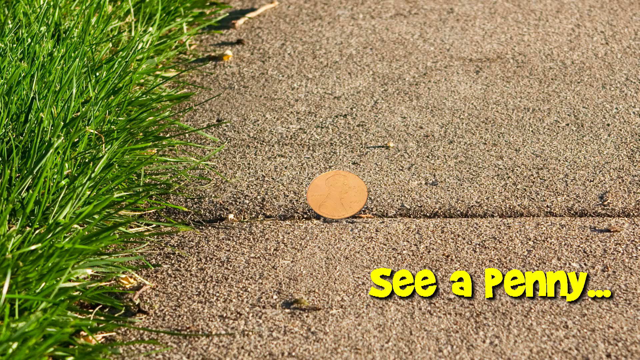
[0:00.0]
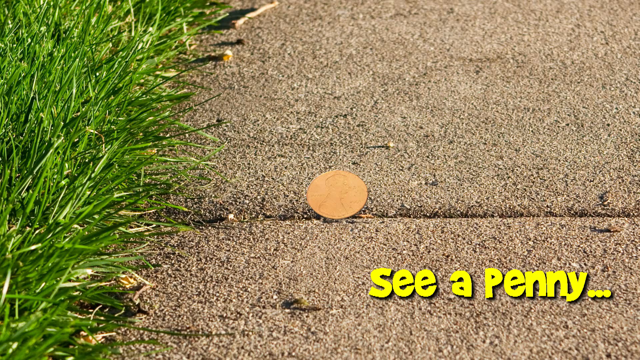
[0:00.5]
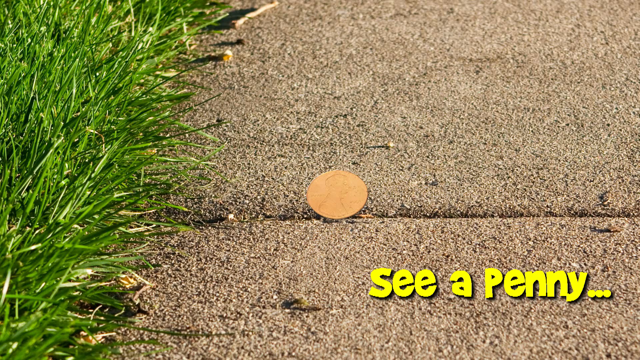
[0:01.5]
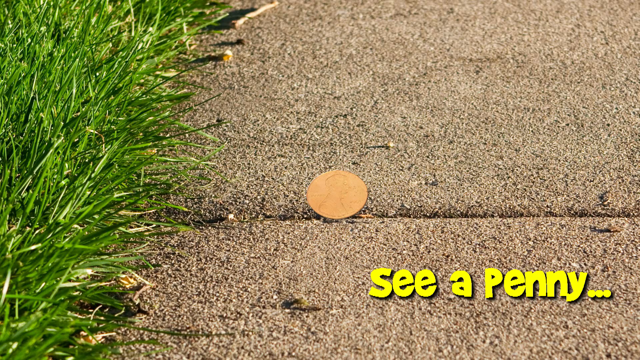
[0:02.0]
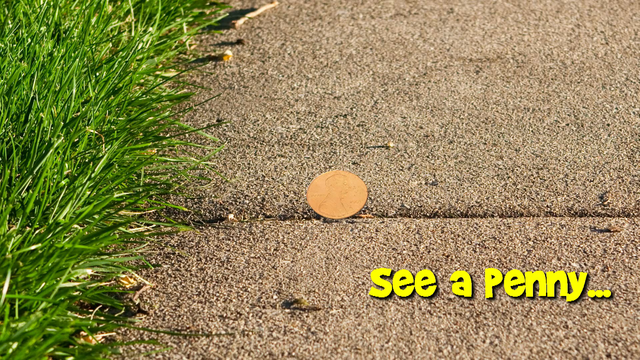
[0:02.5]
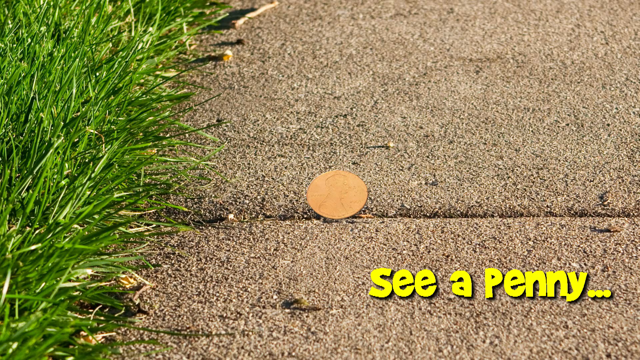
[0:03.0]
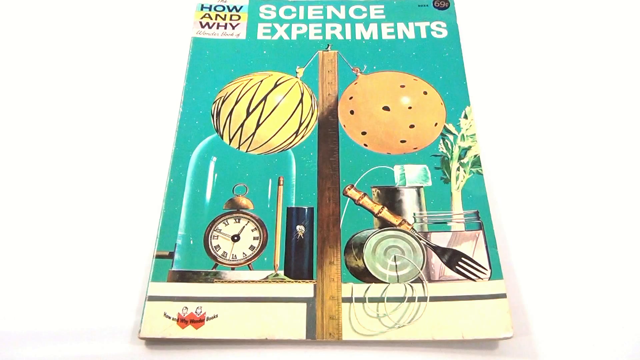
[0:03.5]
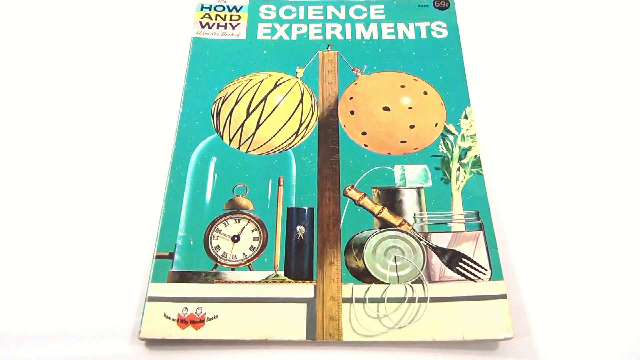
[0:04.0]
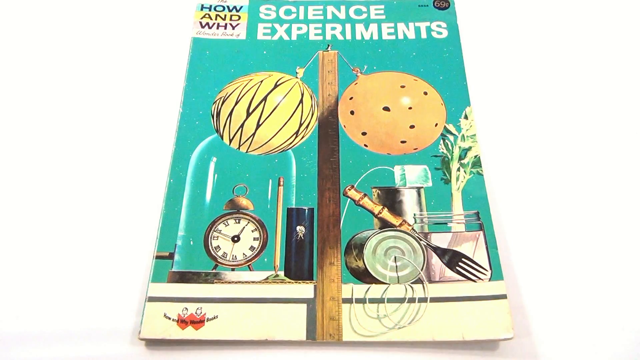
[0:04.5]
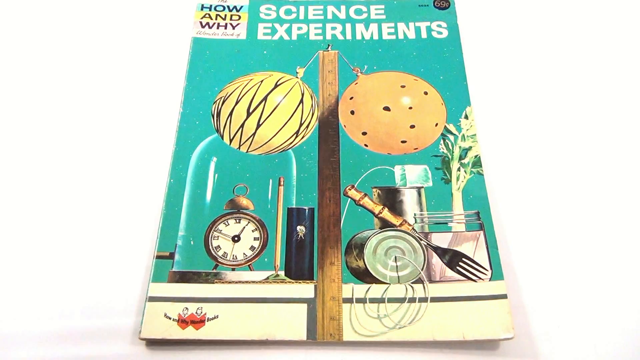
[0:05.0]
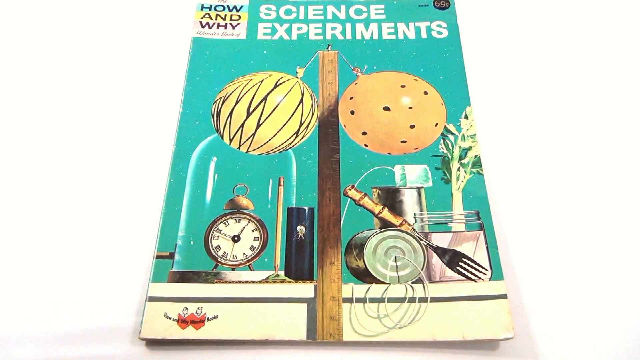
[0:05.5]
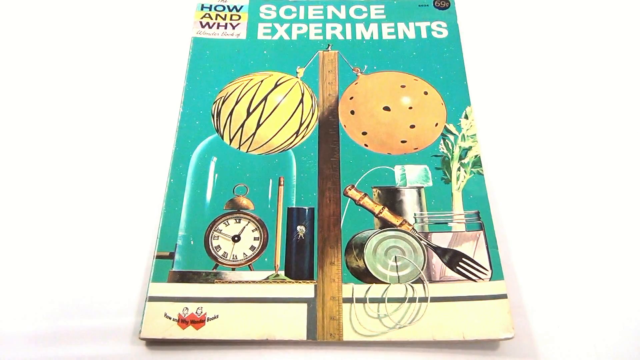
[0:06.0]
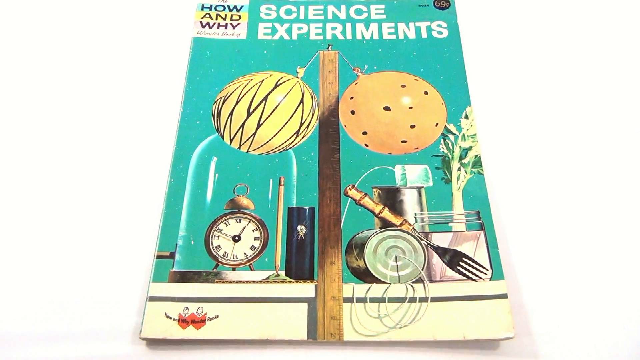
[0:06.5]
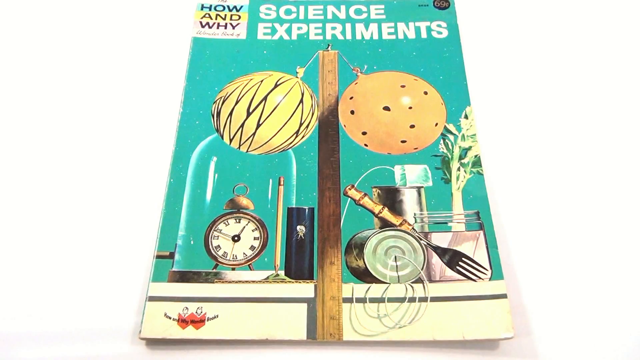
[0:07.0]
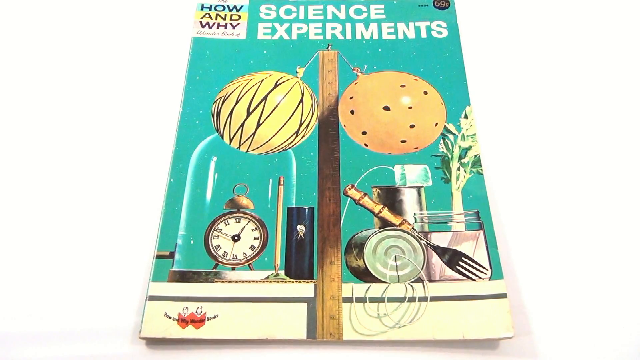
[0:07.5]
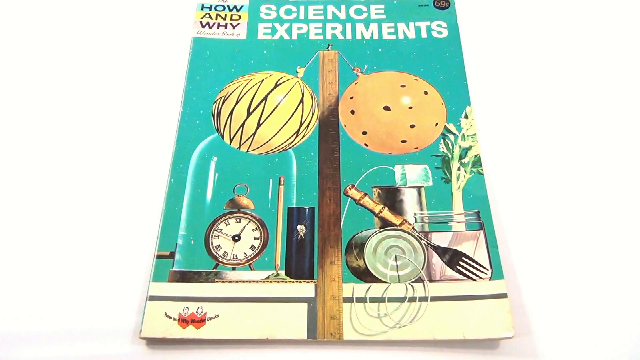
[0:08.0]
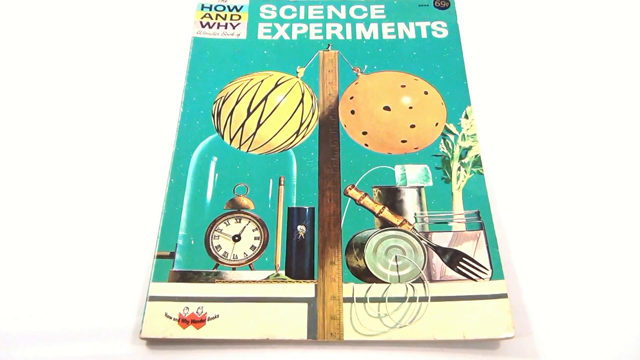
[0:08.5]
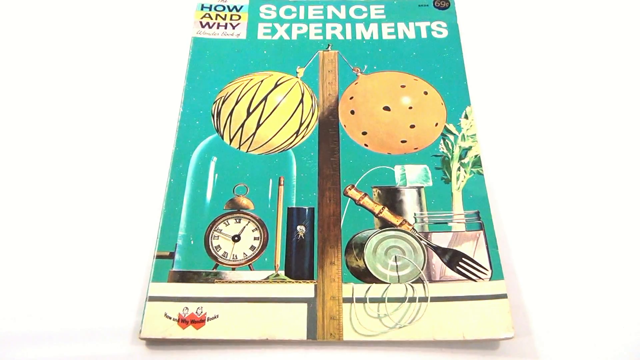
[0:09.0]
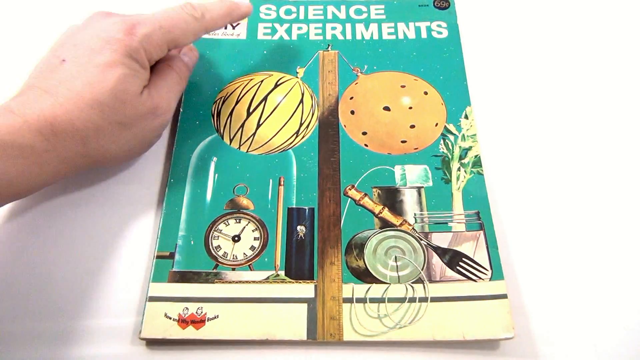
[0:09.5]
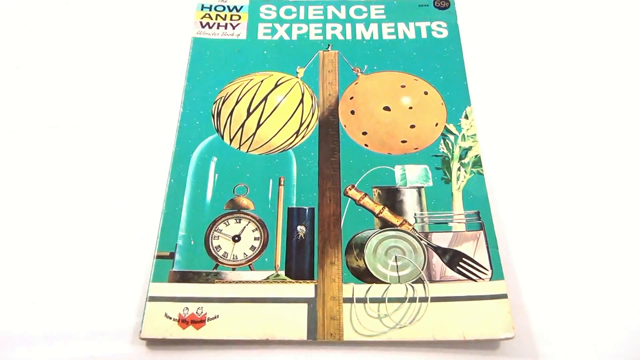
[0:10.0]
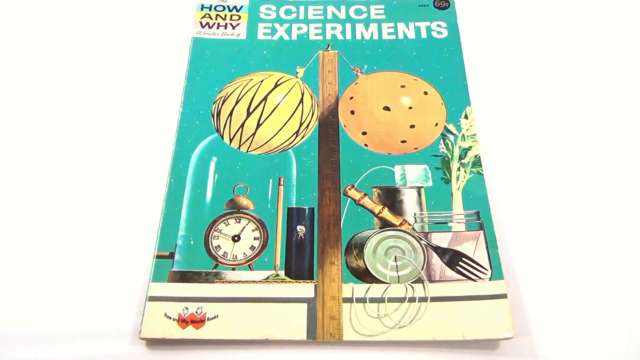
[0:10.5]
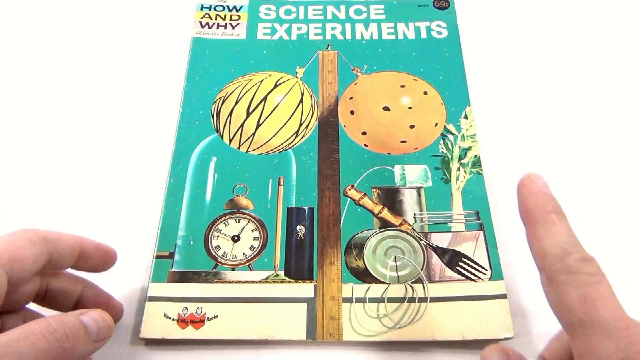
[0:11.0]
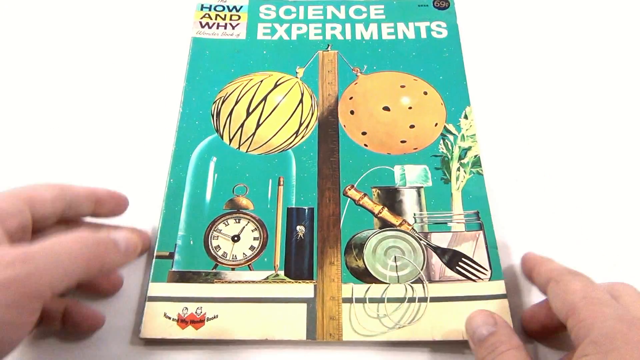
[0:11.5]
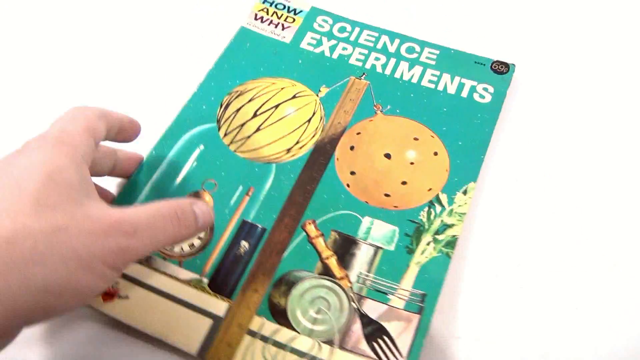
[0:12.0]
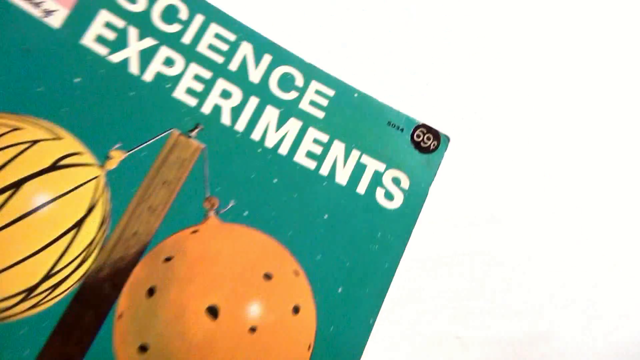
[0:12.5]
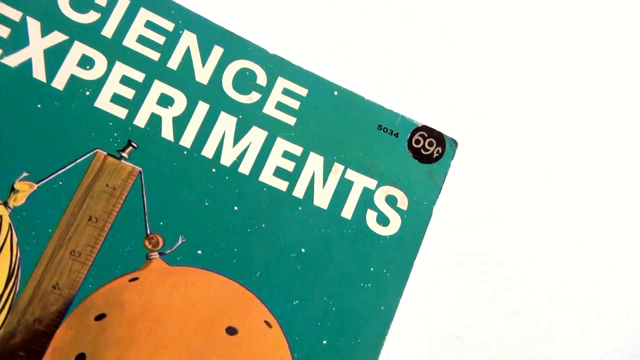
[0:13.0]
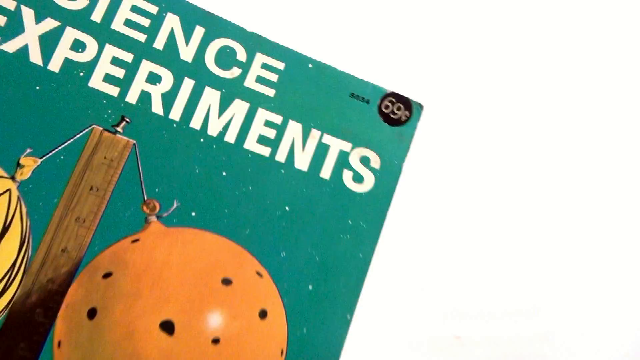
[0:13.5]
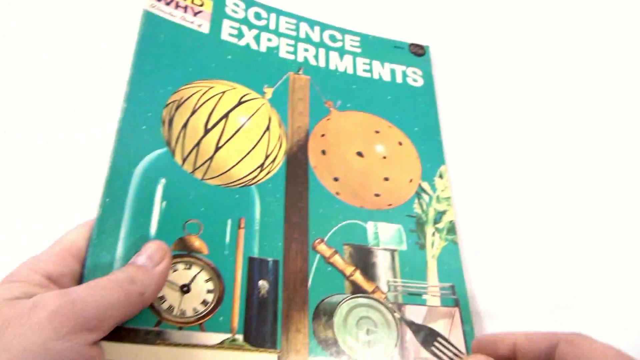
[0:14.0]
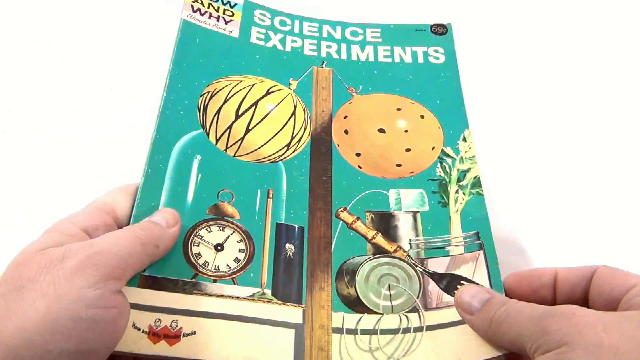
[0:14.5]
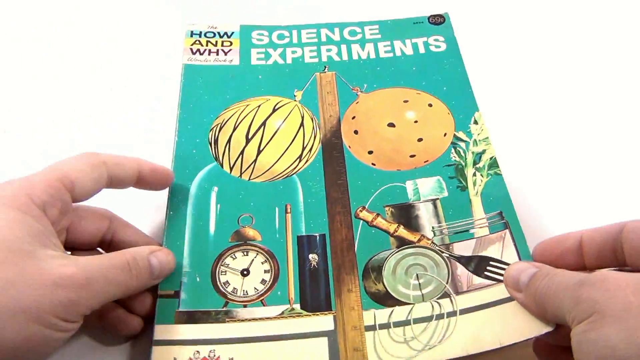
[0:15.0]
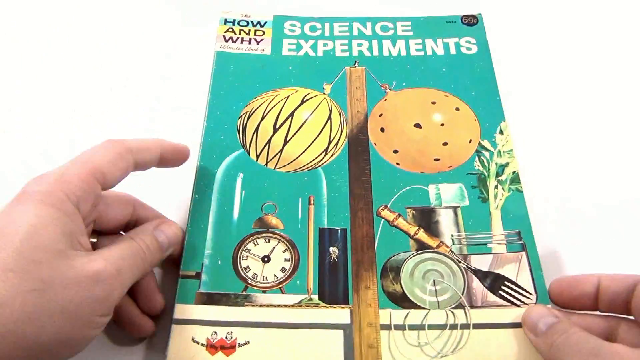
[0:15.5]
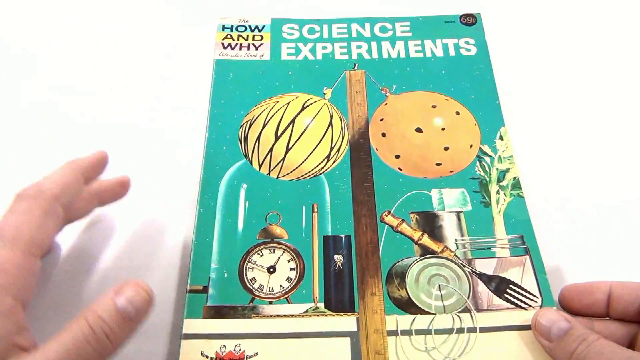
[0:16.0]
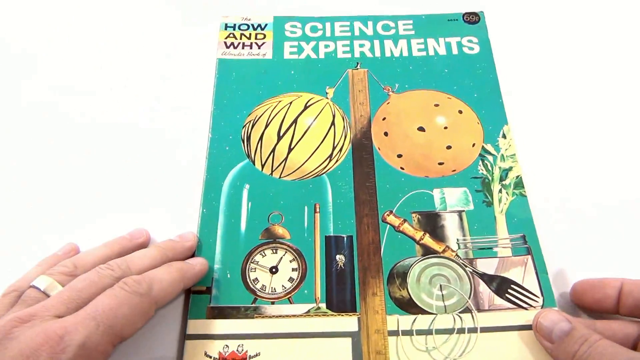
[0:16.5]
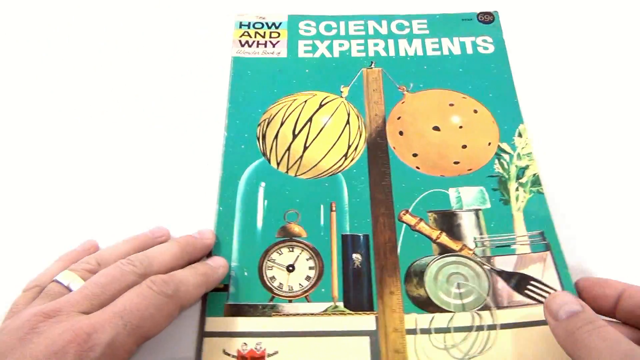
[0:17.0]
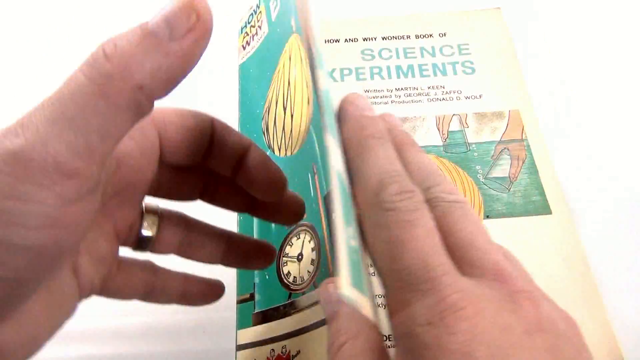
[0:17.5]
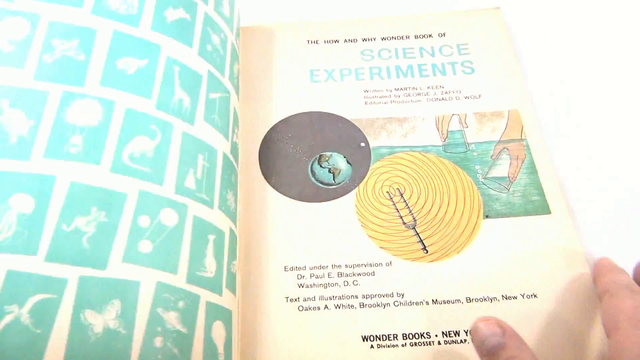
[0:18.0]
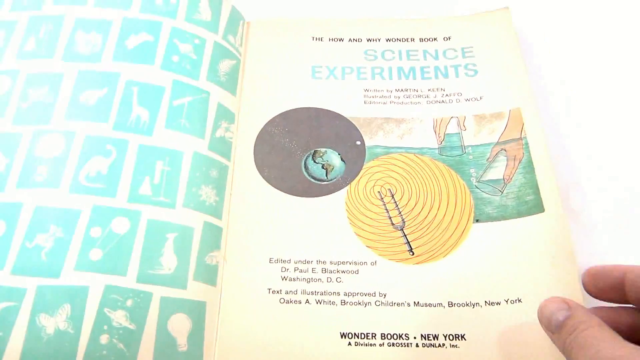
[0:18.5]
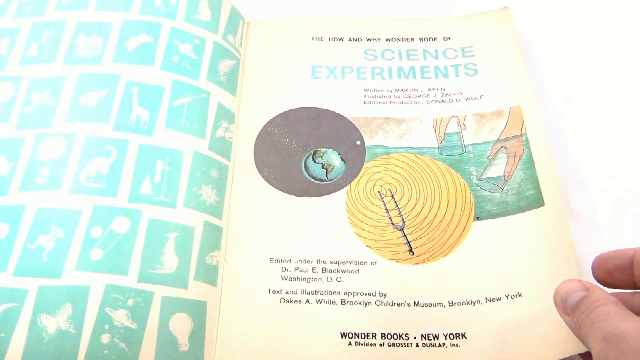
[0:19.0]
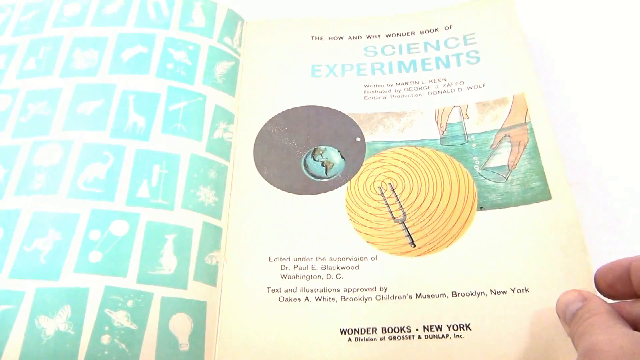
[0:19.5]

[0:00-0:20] The video opens on what appears to be concrete, maybe a sidewalk, with grass on the sides coming over the concrete a little. A very clean penny lies somewhat off to the left, not in the grass, resting just above a crack in the pavement. In the bottom right corner are the words "see a penny" with three periods beside them. The scene changes to a pamphlet with two balloons, a clock and a fork on it. A person points to "how and why" on the flyer, then picks the flyer up to show that it is only 69 cents, which is in a circle on the flyer. They open the flyer with two hands that look like a white person's hands. One balloon is yellow and black; the other is more yellow with black spots. The brochure is called "science experiments". Inside there is a gray ball and a yellow ball that looks almost like yarn.